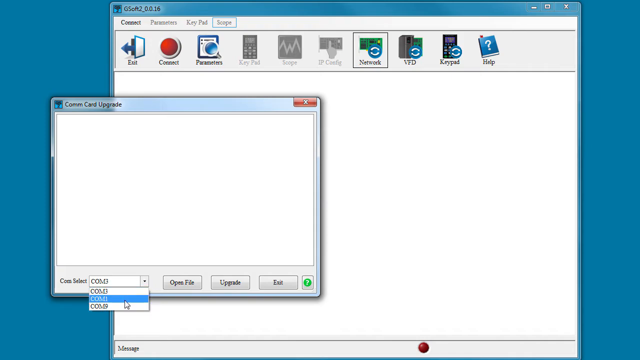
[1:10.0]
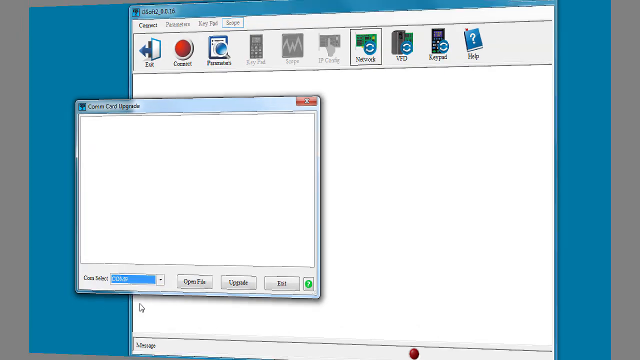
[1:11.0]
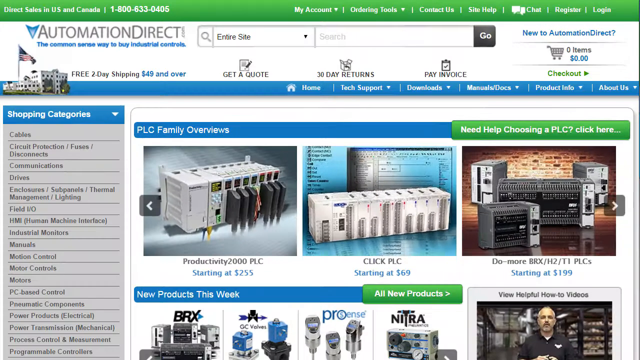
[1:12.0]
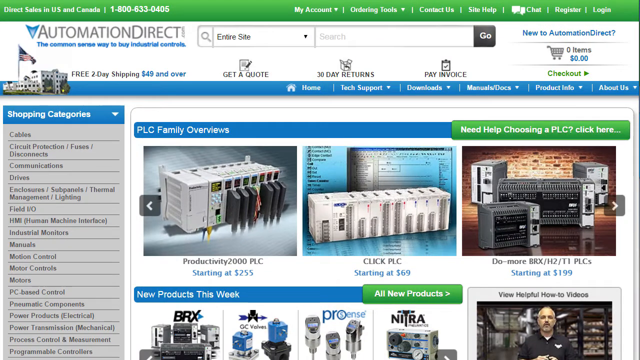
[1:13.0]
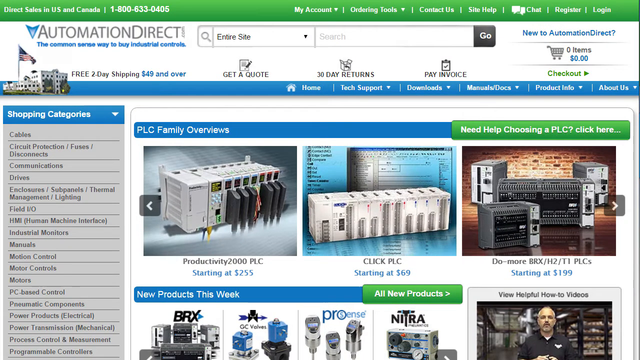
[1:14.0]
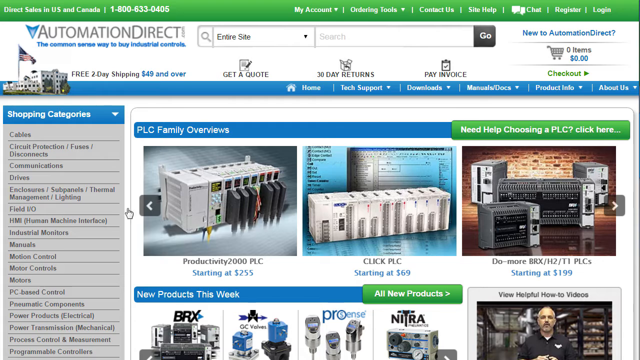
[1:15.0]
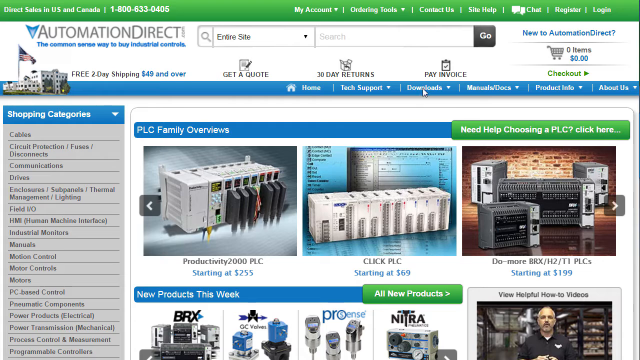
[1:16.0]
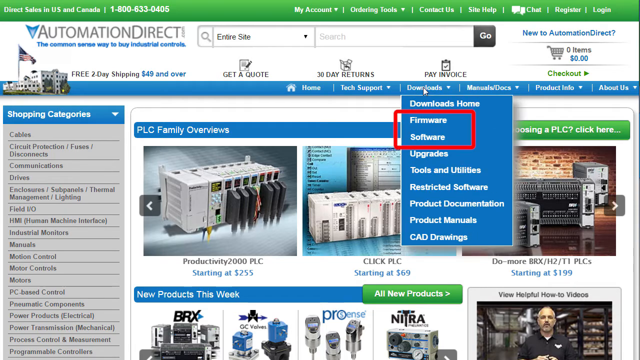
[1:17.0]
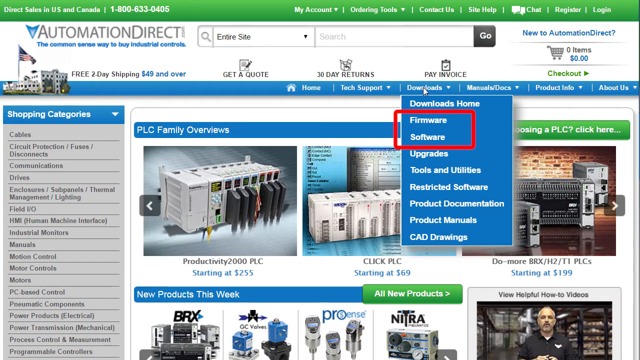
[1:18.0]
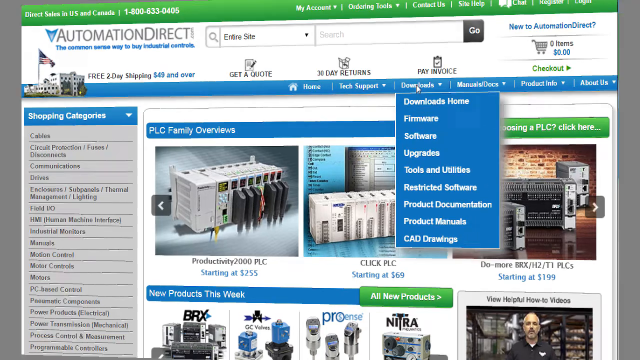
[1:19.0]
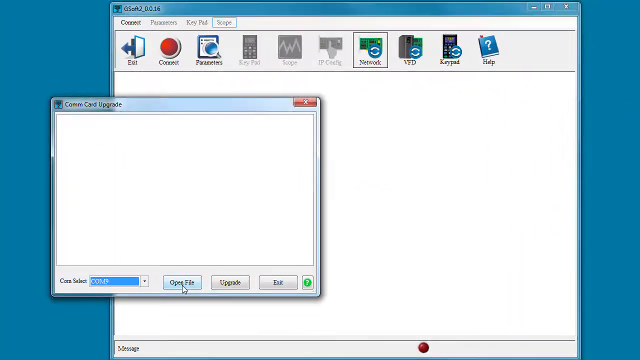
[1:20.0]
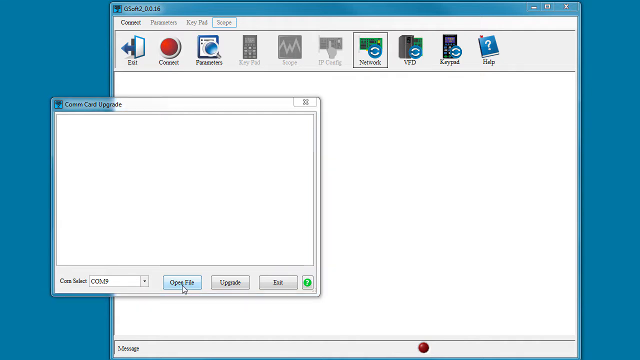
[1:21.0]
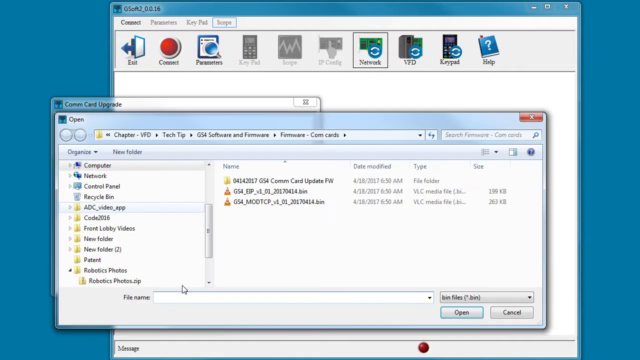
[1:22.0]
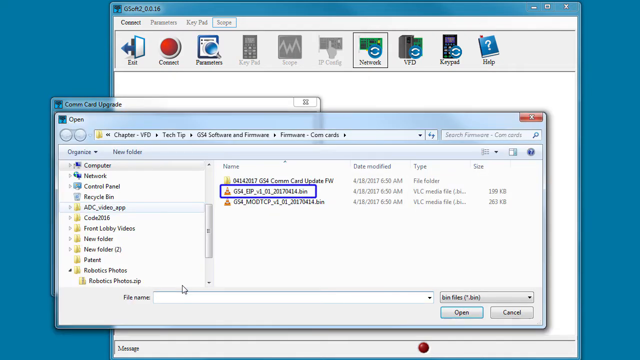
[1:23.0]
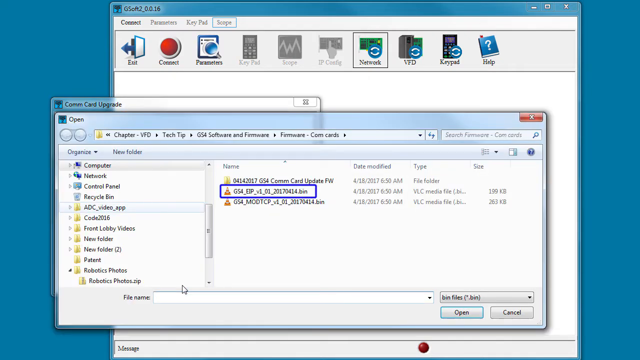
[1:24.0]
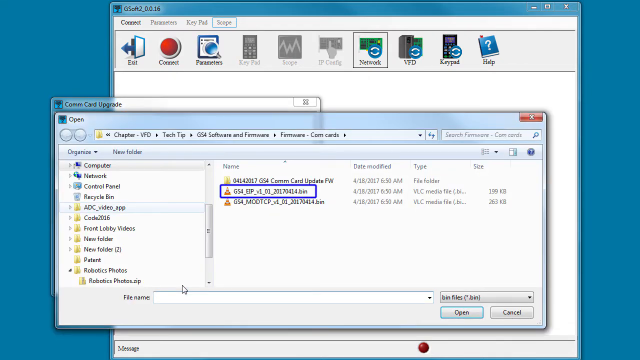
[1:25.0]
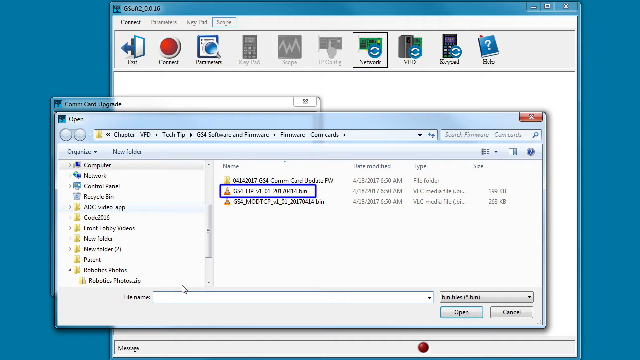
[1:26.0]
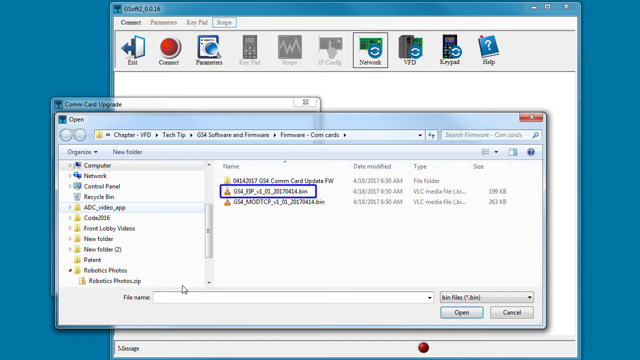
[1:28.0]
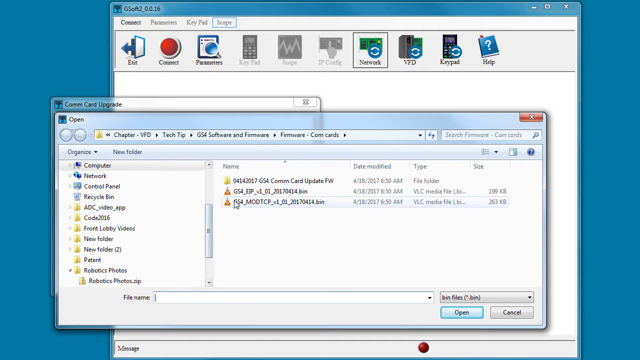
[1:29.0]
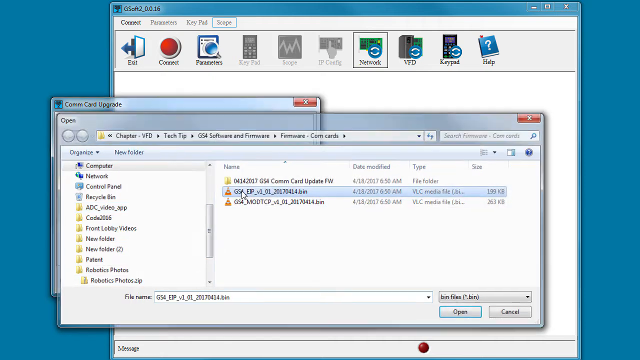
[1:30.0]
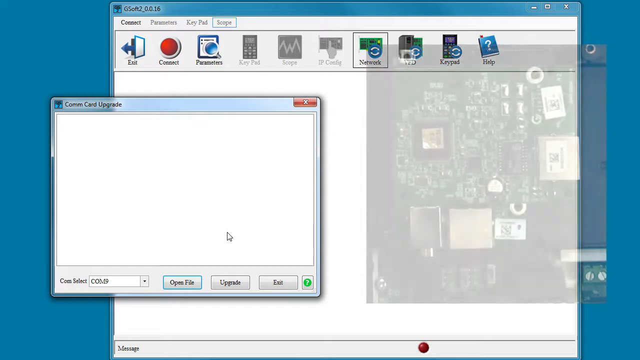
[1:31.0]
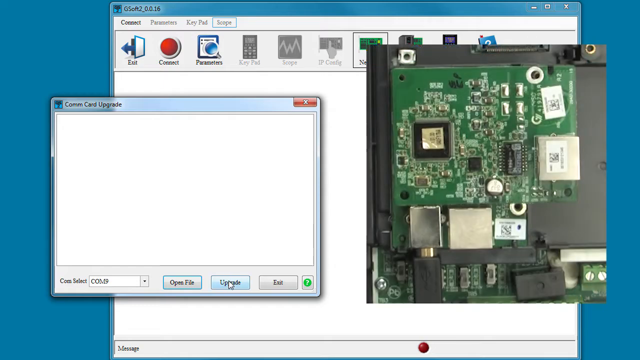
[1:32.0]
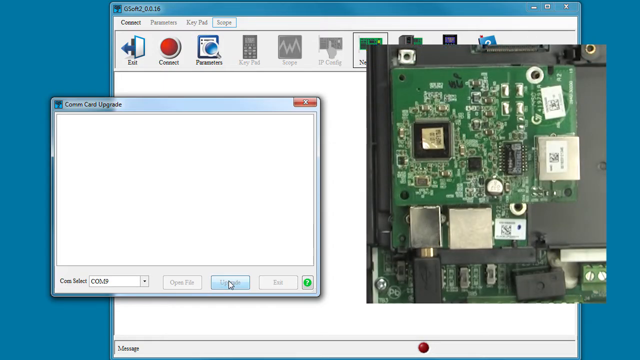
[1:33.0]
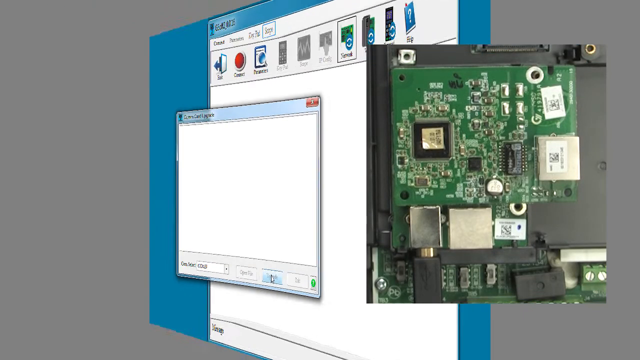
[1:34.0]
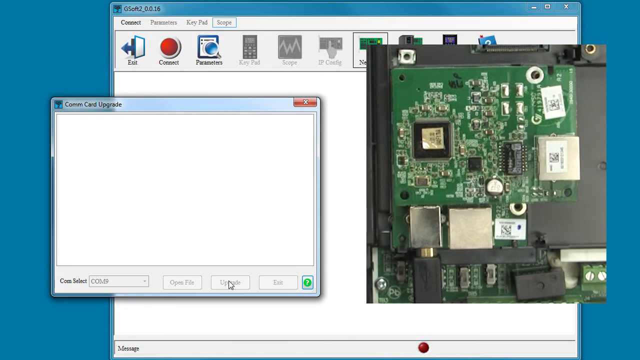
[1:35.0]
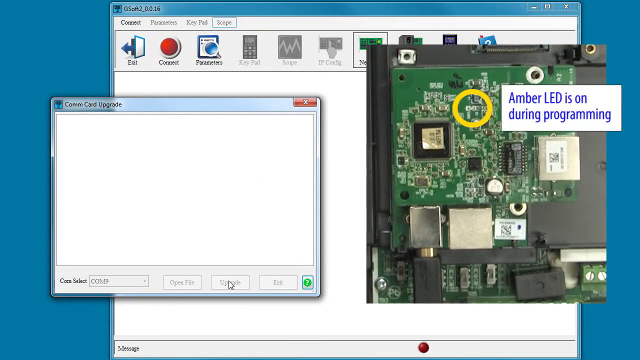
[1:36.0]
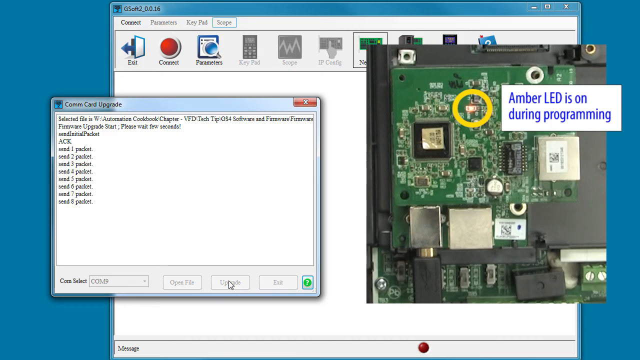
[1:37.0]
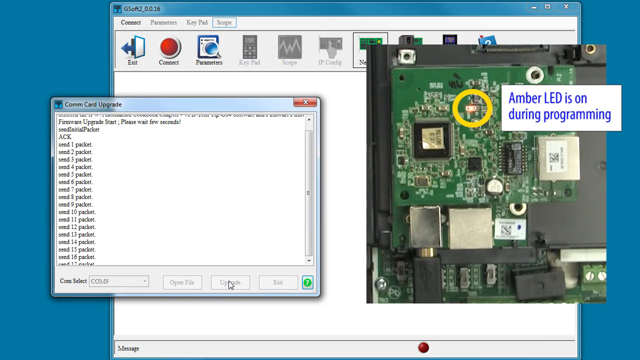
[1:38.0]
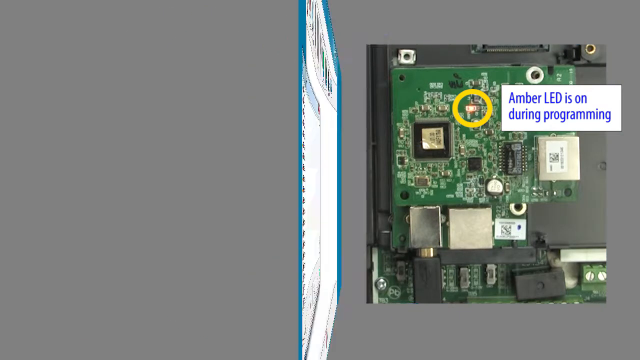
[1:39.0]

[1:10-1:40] An AutomationDirect screen appears, apparently a site selling computer chips and similar items, with options to upgrade firmware or software. The view returns to settings on the computer, where the GS4 is clicked and its settings are upgraded. Text reads "Amber LED is on during the programming," and packets are shown coming through. At the top of the screen it says "GSoft version 2.0.0.16." The menu includes Connect, Parameters, Keypad and Scope, and there are also Network, keypads, VFDs and an Exit button.